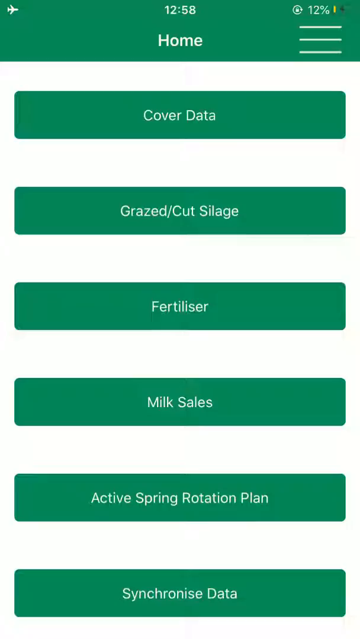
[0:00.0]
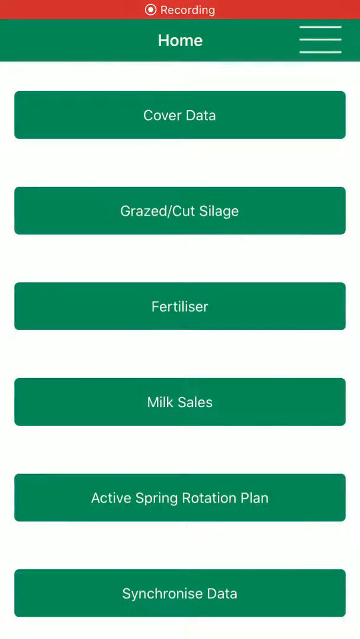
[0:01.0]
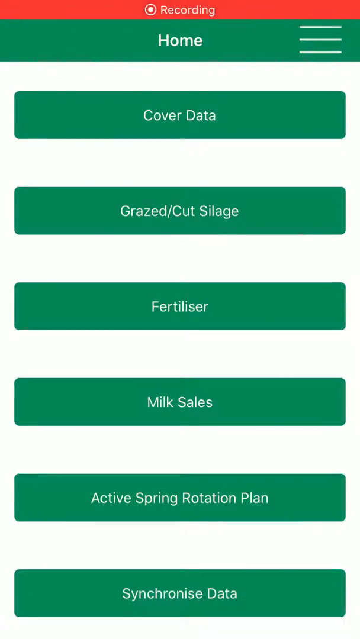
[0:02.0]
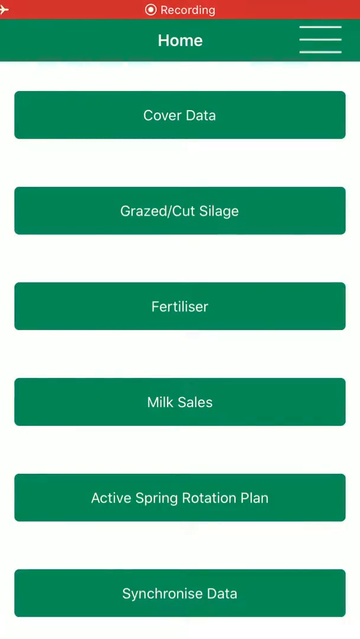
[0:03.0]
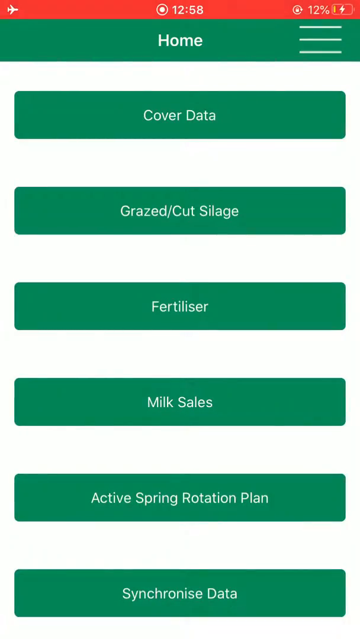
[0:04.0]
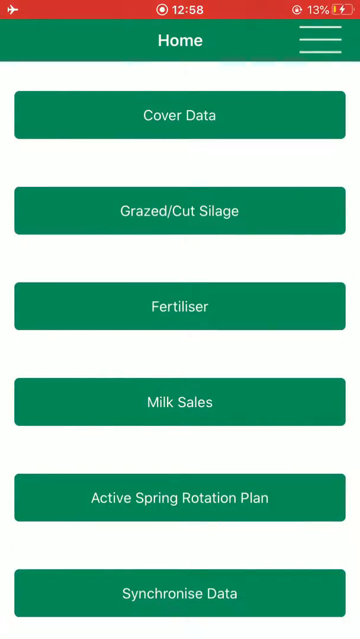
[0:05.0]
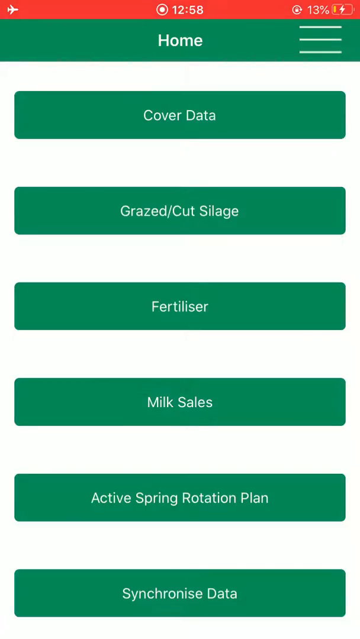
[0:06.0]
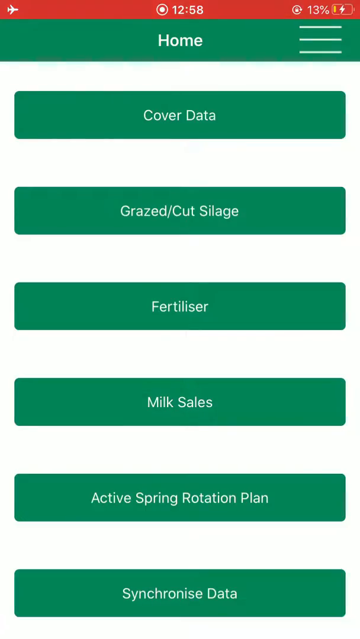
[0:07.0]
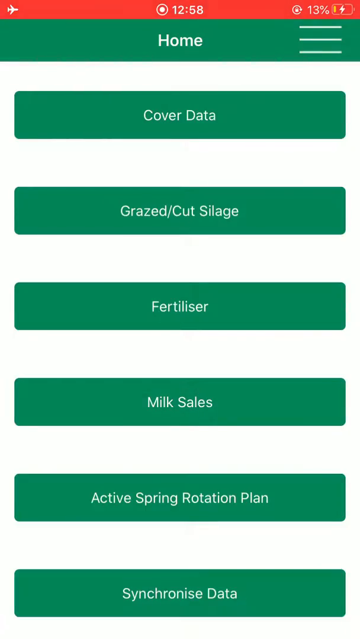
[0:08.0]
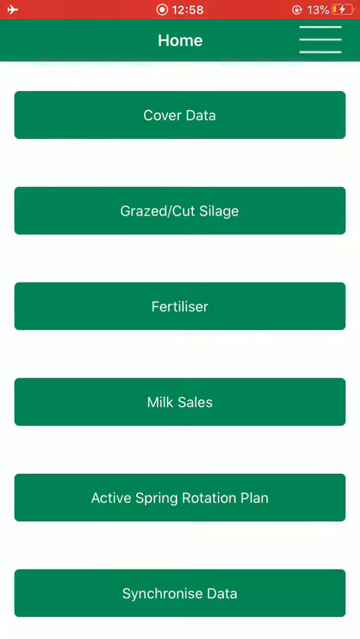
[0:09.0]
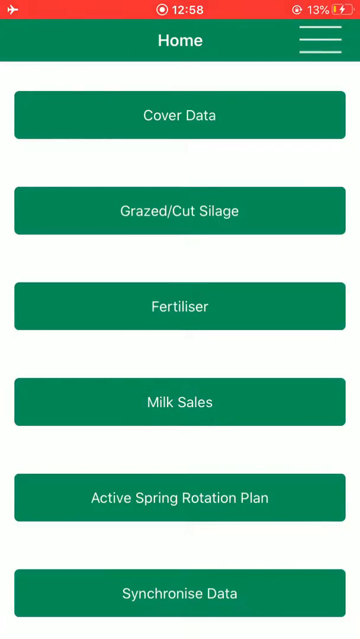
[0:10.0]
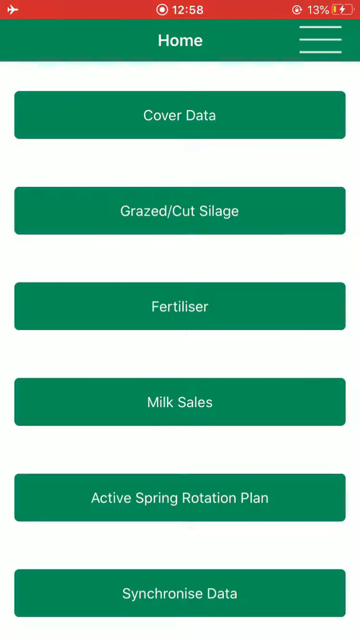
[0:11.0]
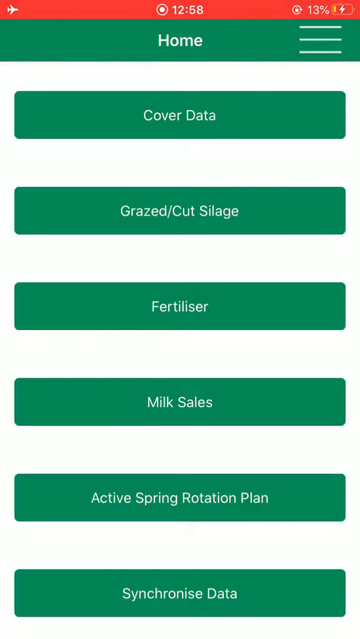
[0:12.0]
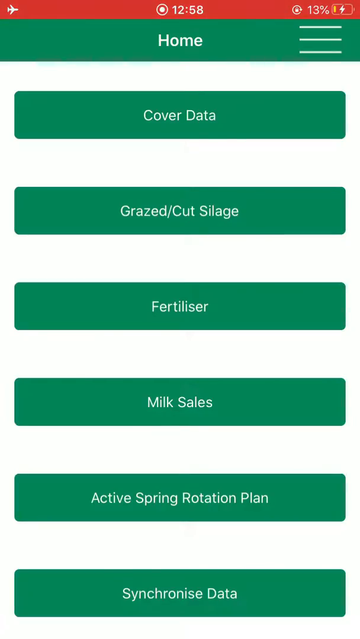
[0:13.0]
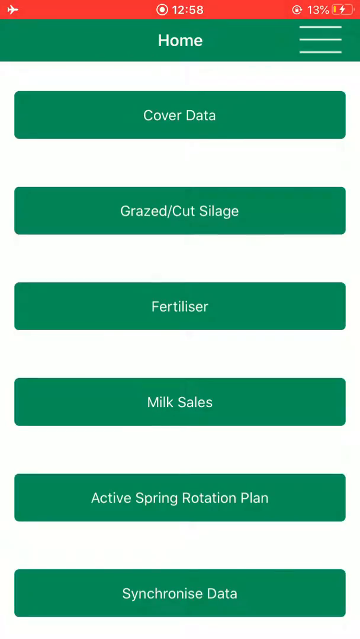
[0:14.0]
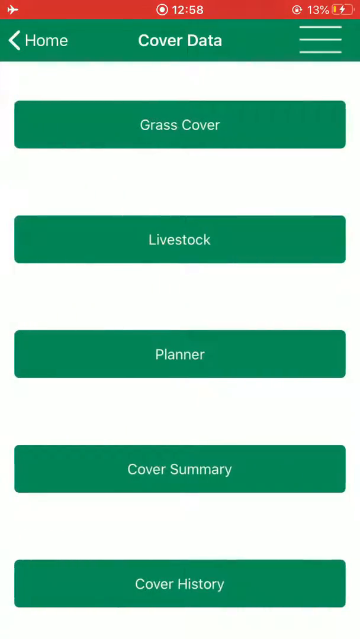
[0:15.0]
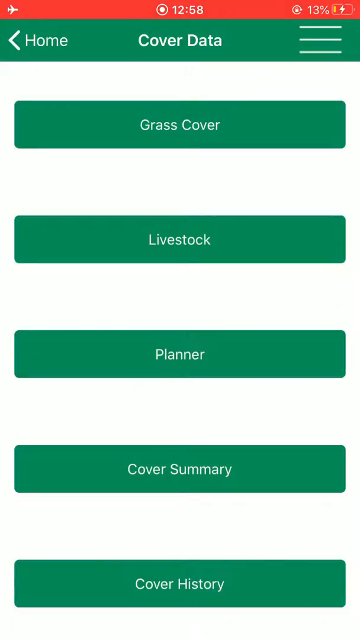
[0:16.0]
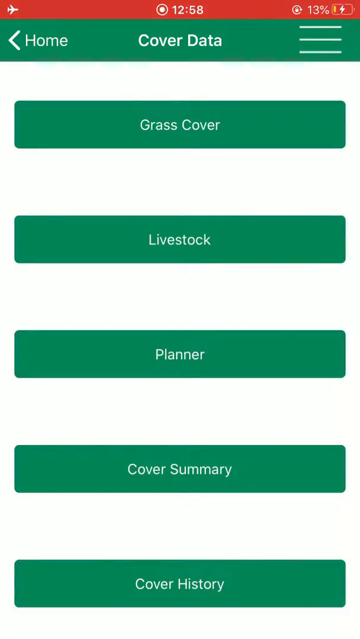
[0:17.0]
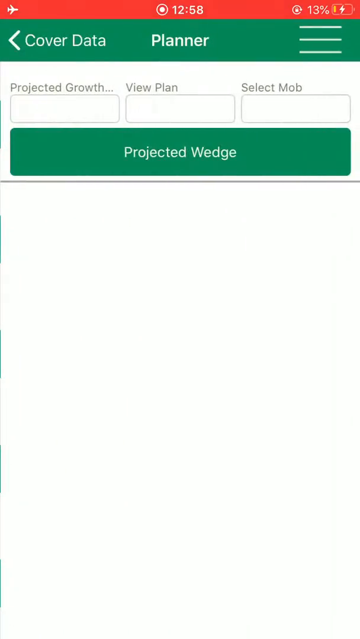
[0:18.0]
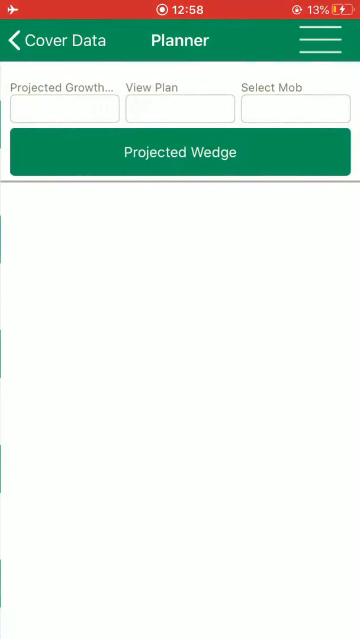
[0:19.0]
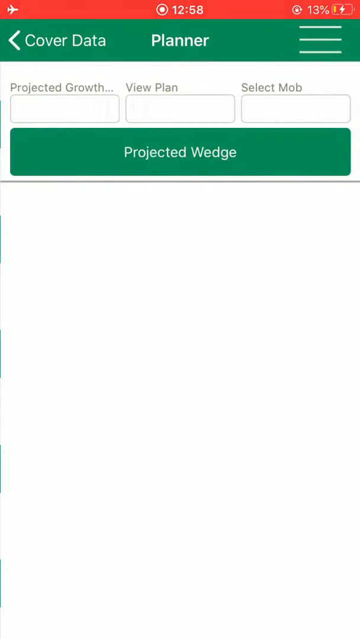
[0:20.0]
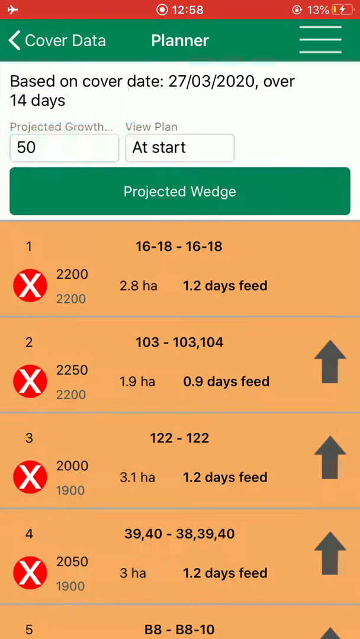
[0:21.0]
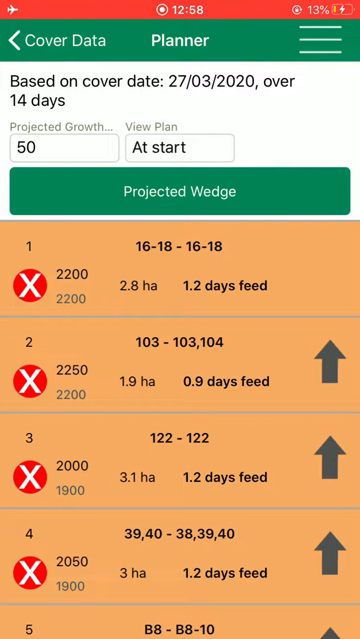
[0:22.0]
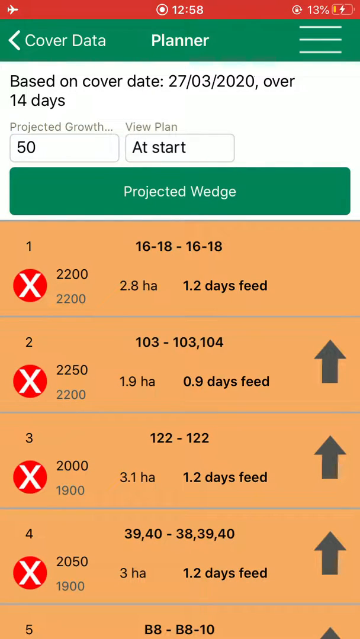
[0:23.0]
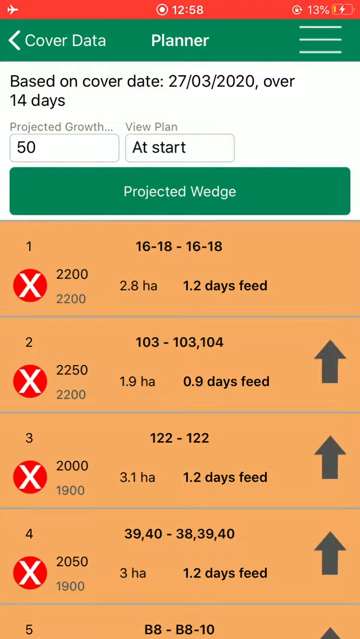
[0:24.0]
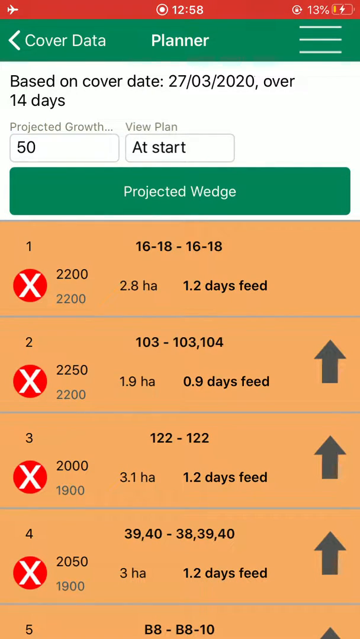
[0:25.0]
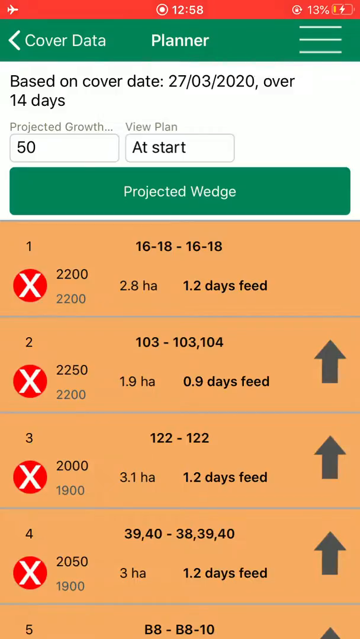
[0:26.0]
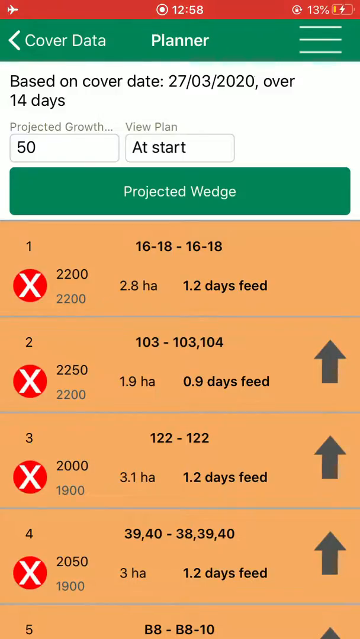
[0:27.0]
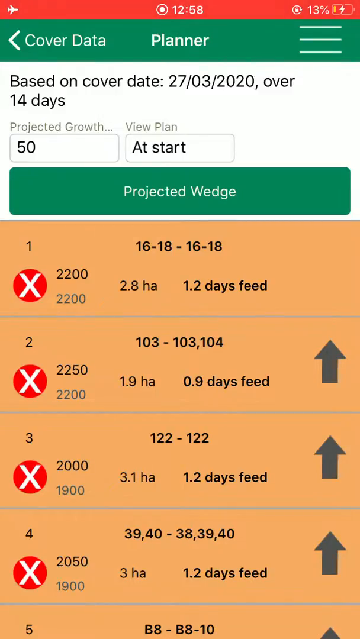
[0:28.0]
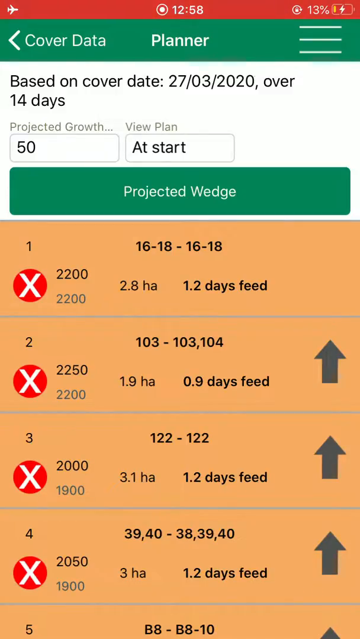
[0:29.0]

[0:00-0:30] A series of what look like mobile screenshots is shown. The top bar is red, with a small airplane in the left corner, what looks like a time, 12:58, in the middle, and a battery symbol on the right with "13%" beside it, indicating 13% battery remaining. Below that is a row of headings shaped like green rectangles laid horizontally, separated by white spaces: "home", "cover data", "grazed cut silage", "fertilizer", "milk sales", "active spring rotation plan" and "synchronized data". It then looks like someone swipes to the left, revealing a new series of rectangles: "grass cover", "livestock", "planner", "cover summary" and "cover history".